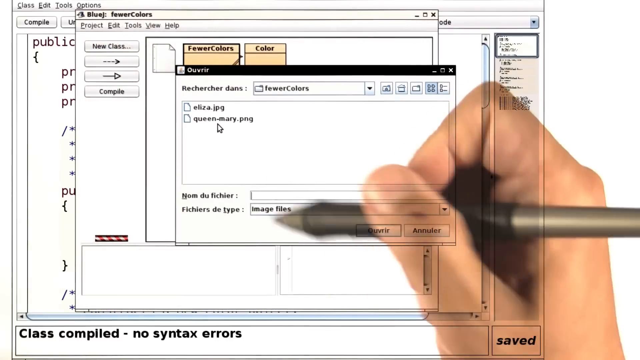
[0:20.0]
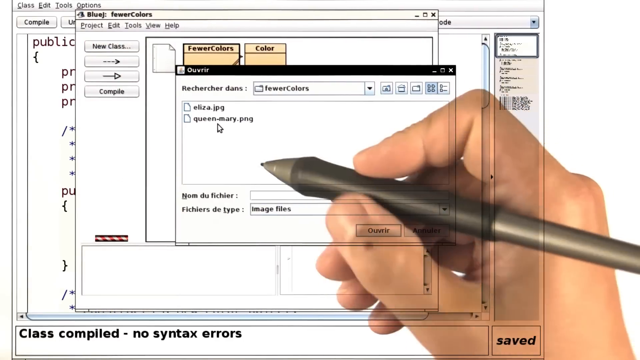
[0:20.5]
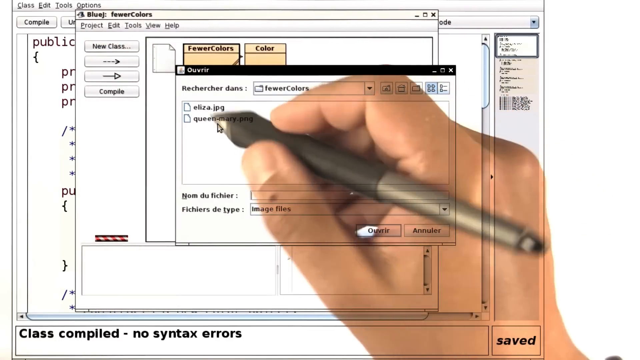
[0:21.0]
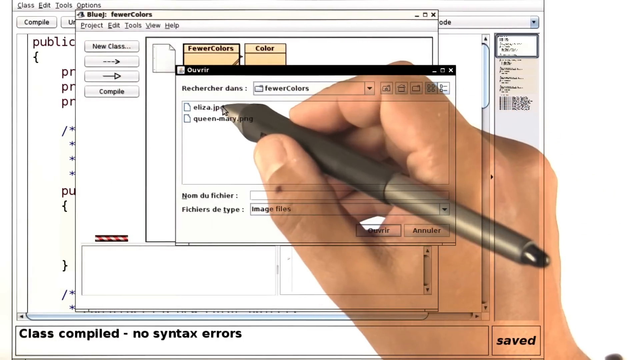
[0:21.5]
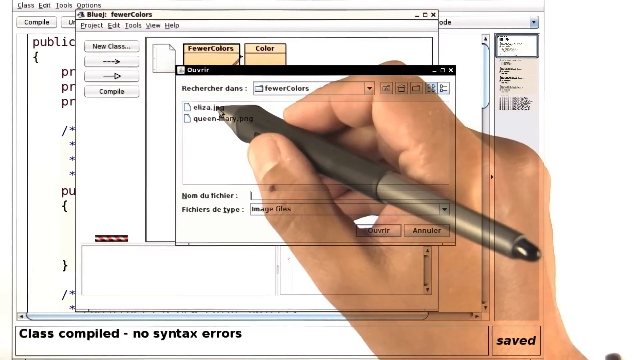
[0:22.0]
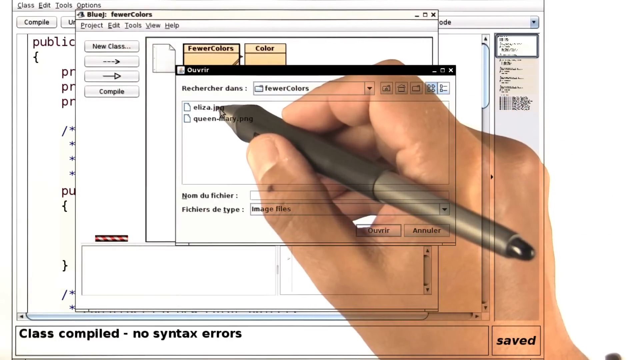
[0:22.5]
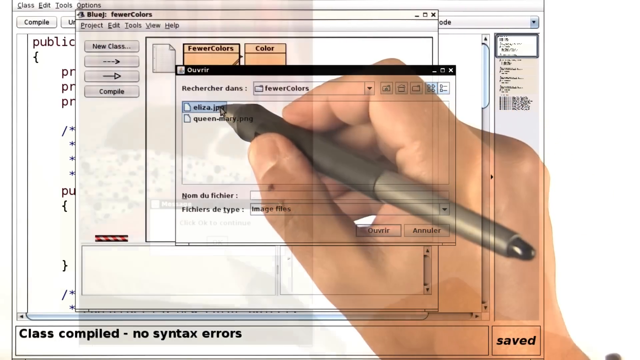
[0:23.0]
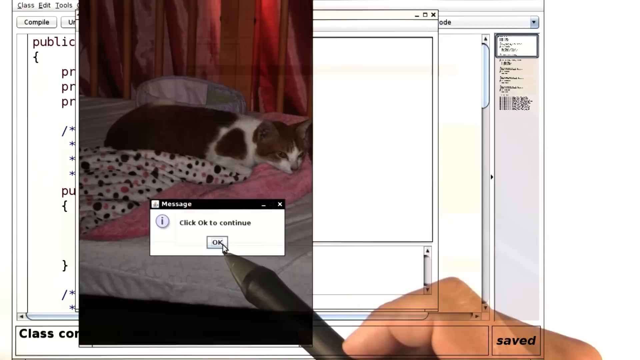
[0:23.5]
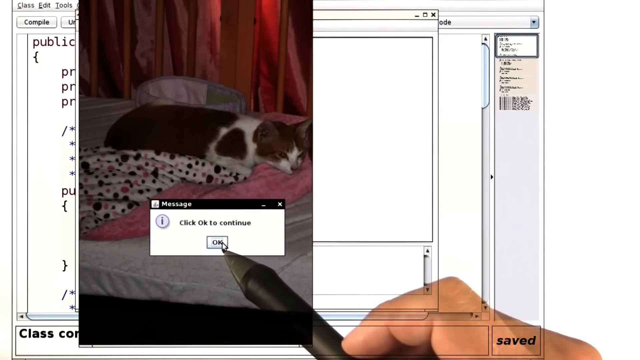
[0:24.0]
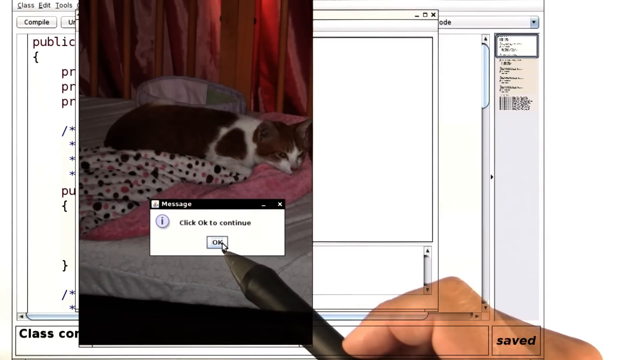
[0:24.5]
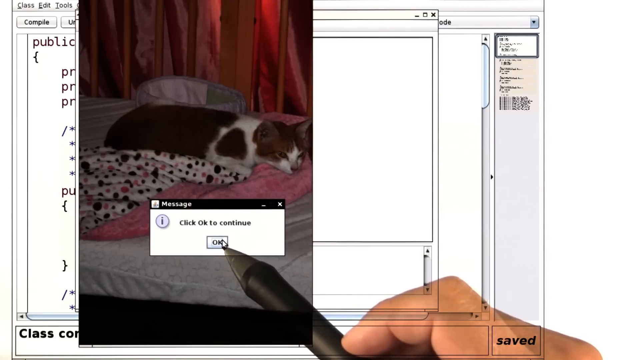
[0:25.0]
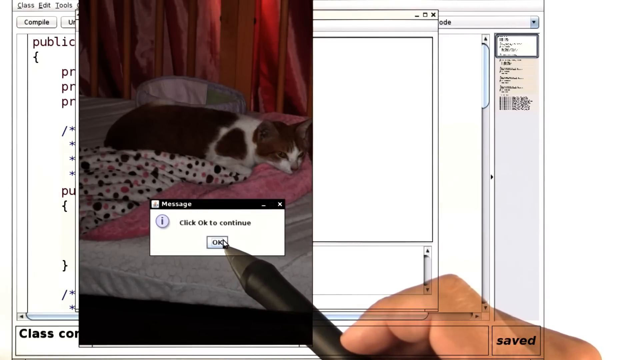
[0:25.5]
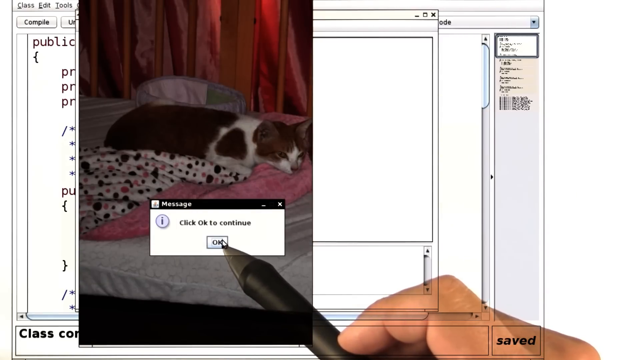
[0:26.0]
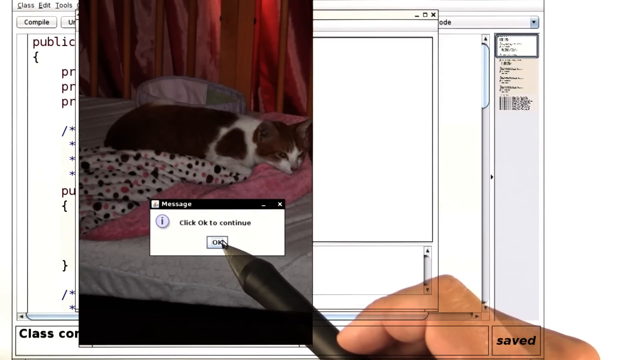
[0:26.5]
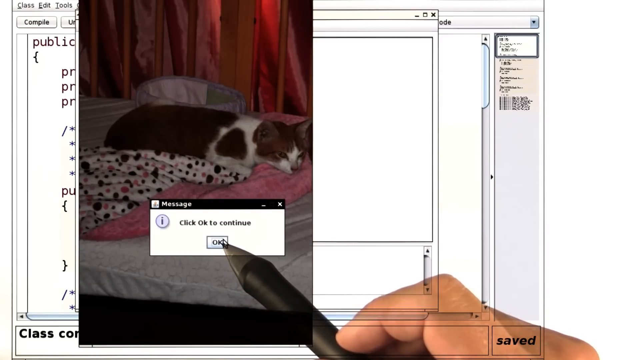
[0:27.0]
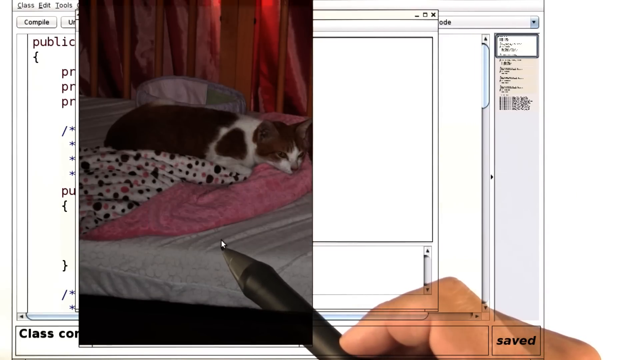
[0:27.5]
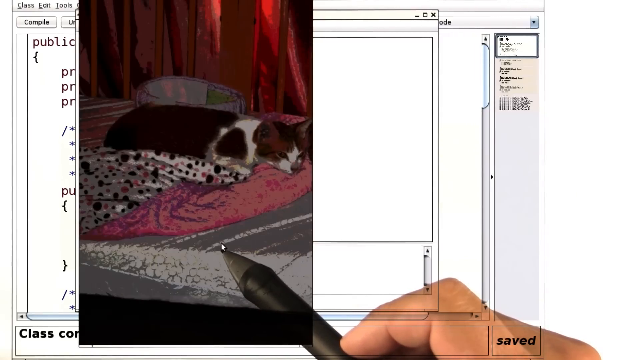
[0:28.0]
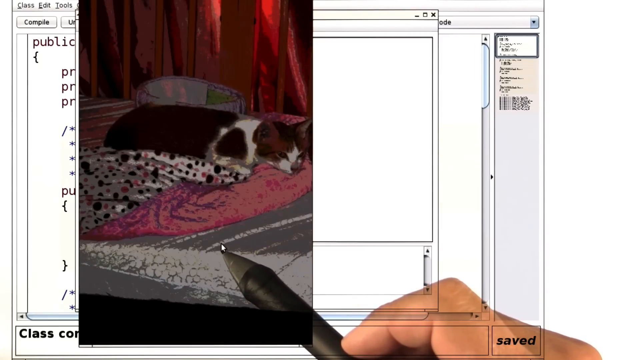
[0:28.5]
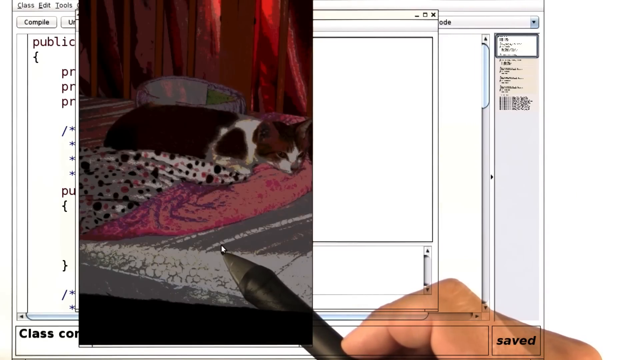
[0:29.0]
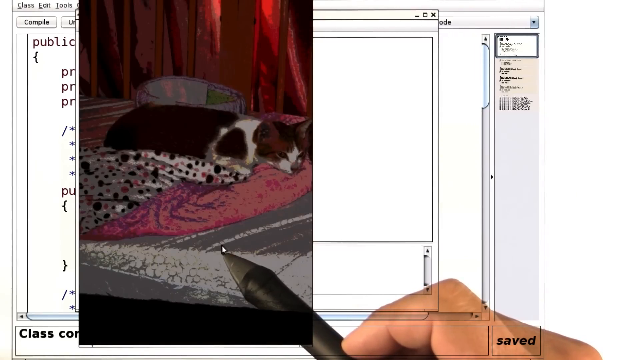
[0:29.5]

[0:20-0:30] The person is now moving a file named Eliza, and the screen says "click OK to continue." The file appears to contain a picture of their cat. They move the picture, the prompt to click OK appears, and once they have clicked, they seem able to move it. For the most part they appear to be moving items around, making room for some items and allowing for some changes.